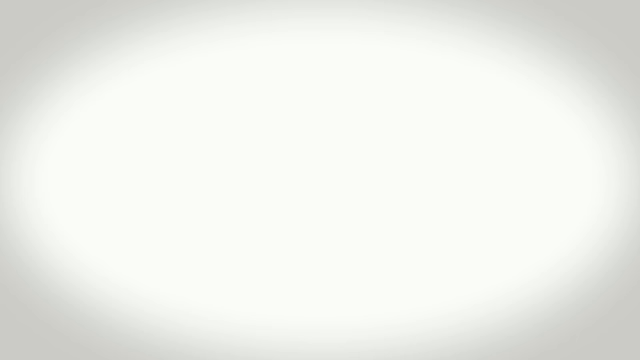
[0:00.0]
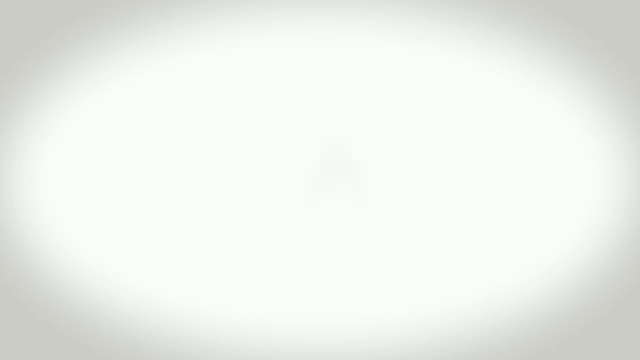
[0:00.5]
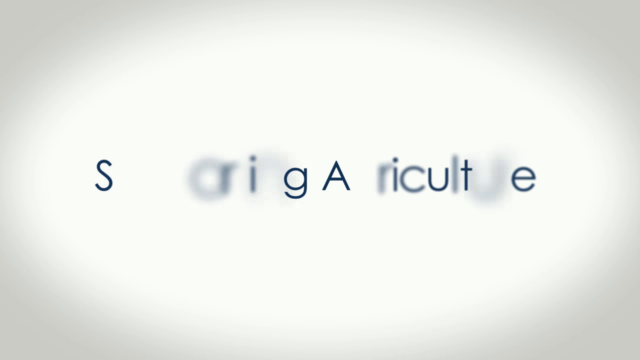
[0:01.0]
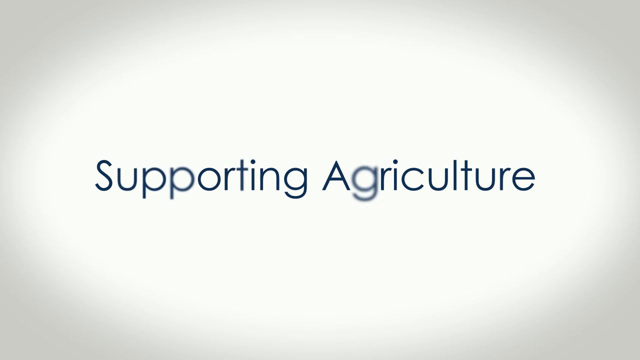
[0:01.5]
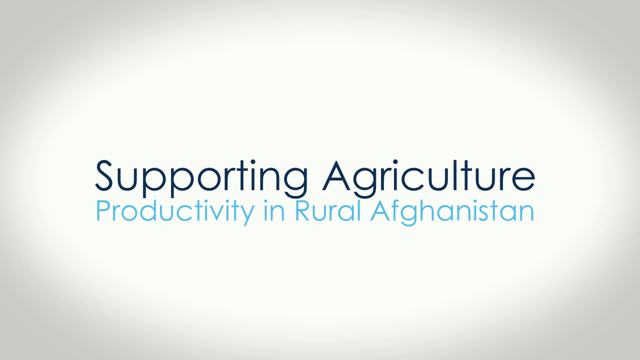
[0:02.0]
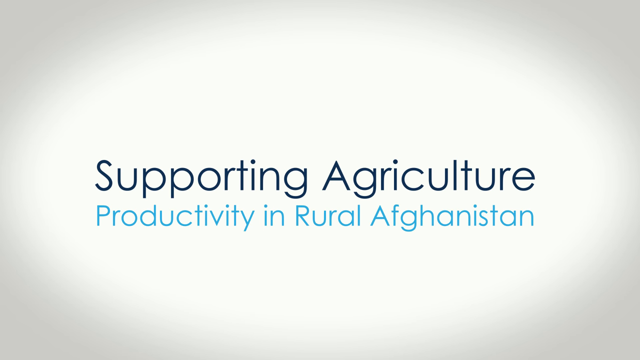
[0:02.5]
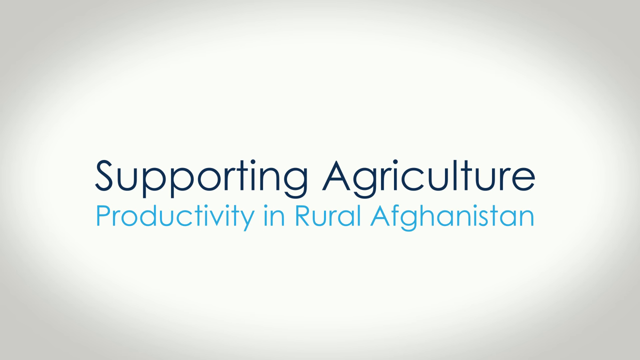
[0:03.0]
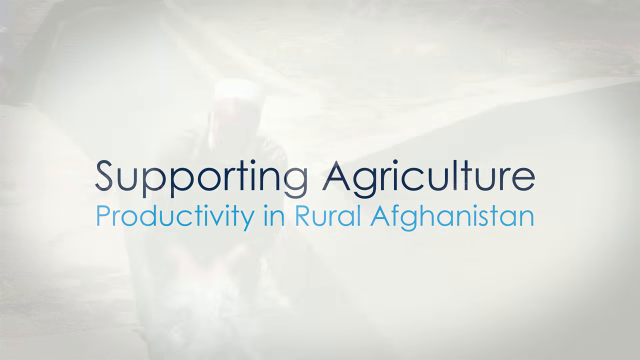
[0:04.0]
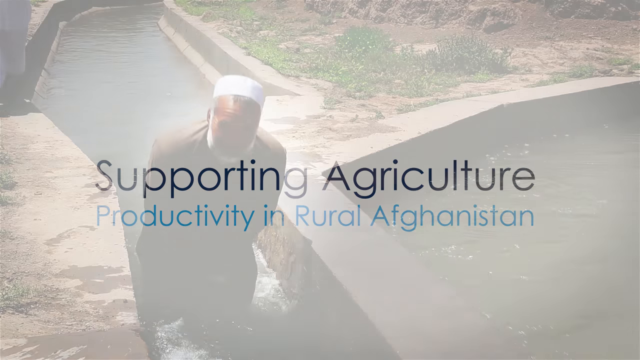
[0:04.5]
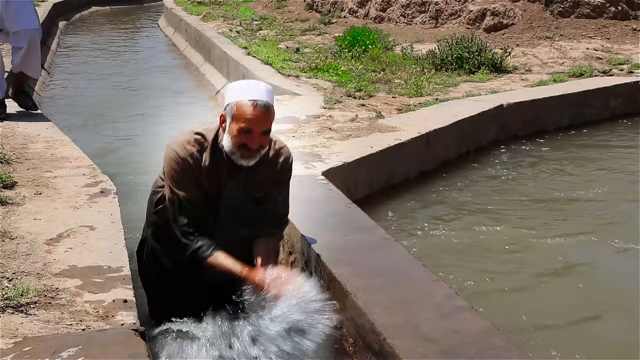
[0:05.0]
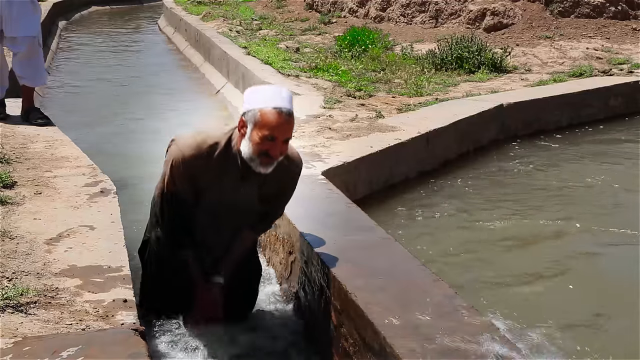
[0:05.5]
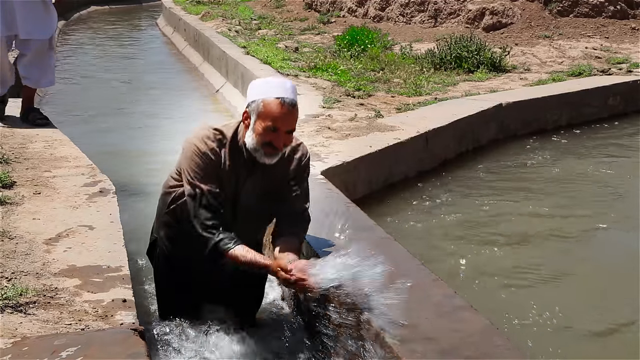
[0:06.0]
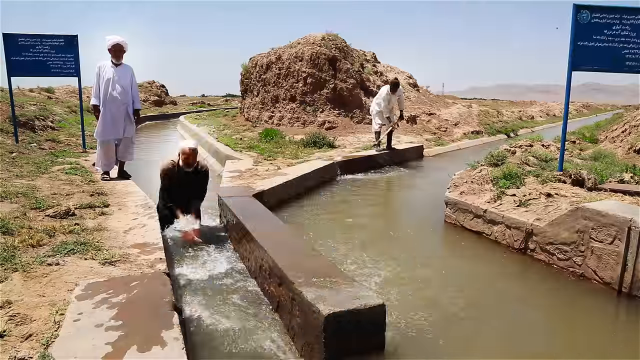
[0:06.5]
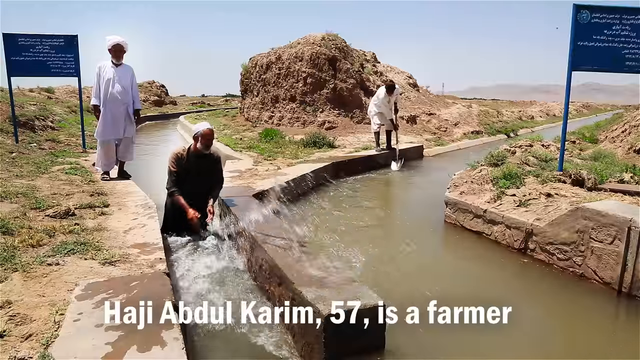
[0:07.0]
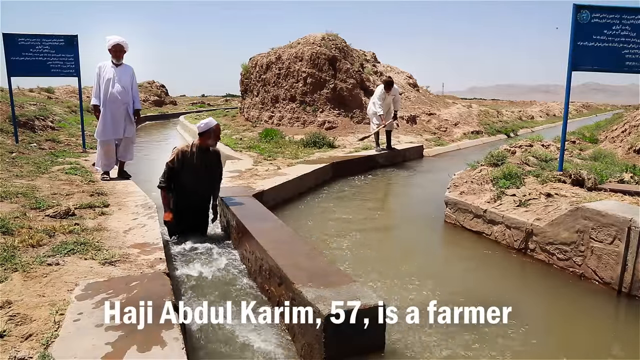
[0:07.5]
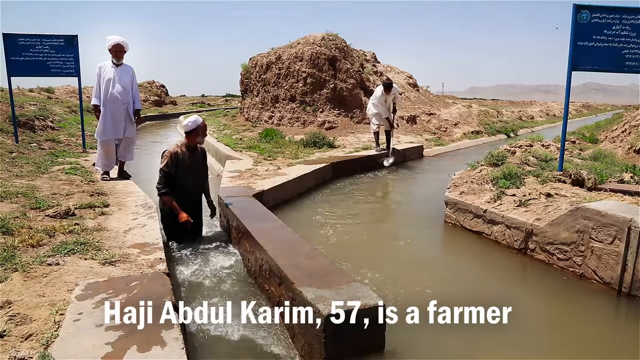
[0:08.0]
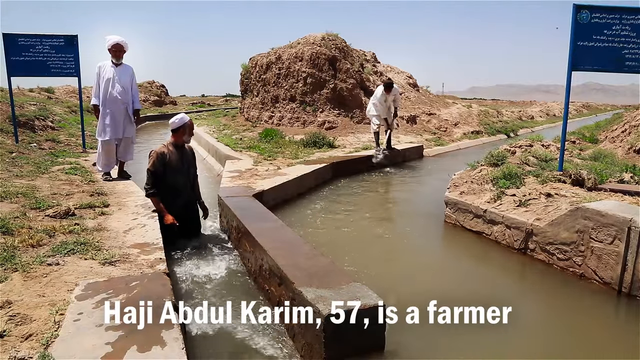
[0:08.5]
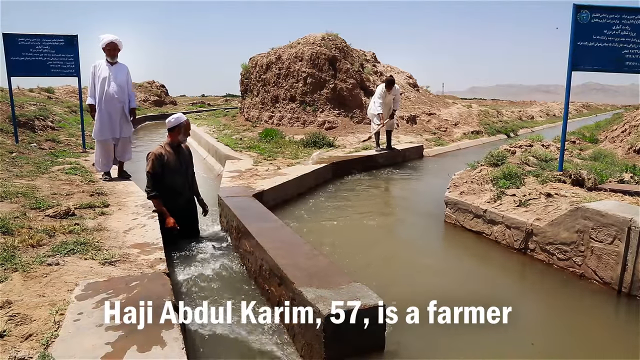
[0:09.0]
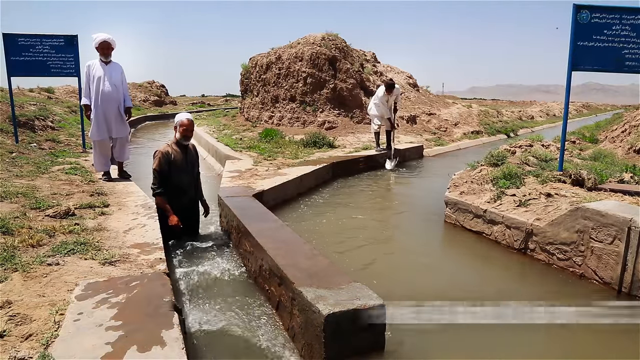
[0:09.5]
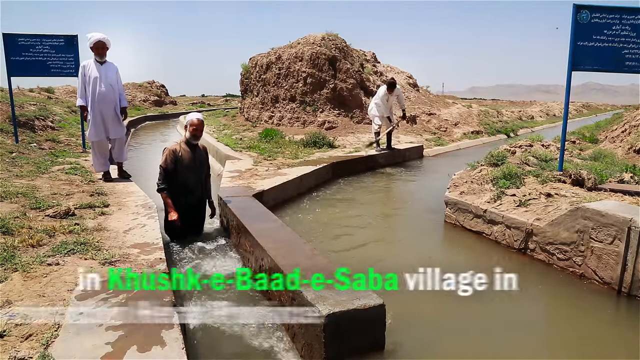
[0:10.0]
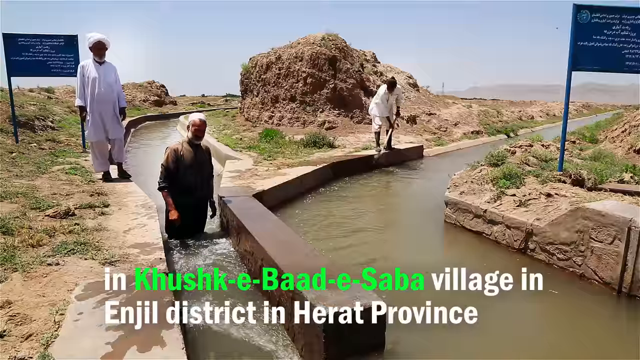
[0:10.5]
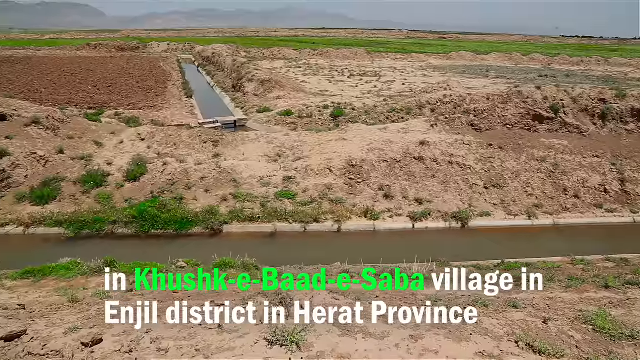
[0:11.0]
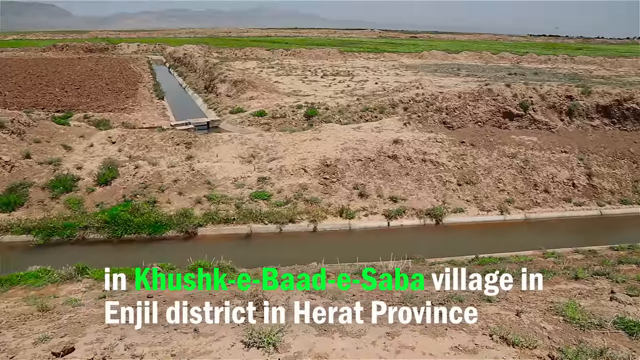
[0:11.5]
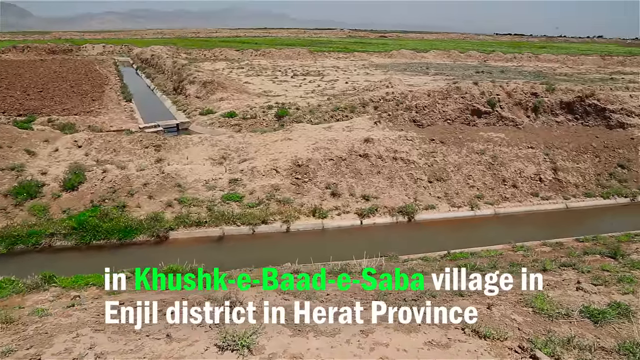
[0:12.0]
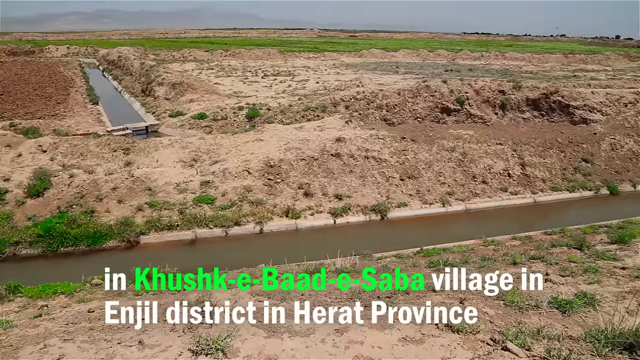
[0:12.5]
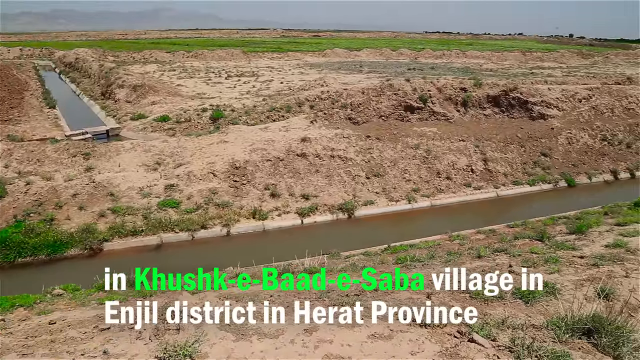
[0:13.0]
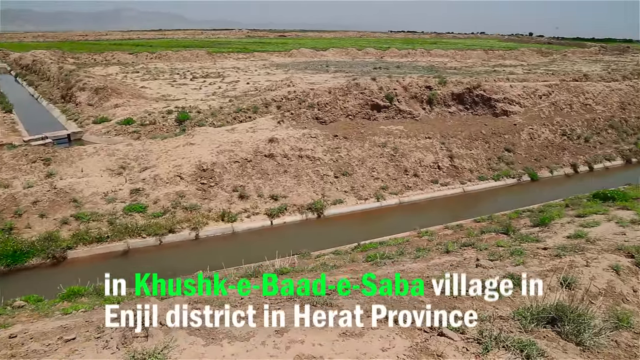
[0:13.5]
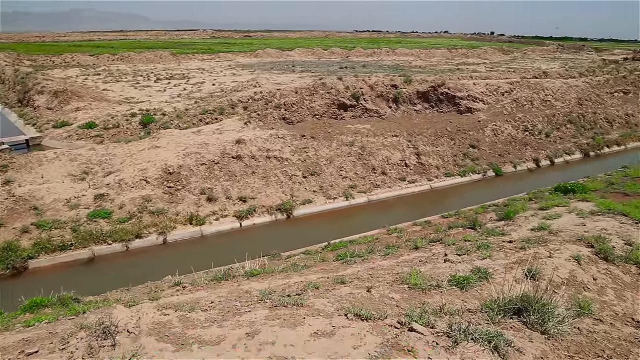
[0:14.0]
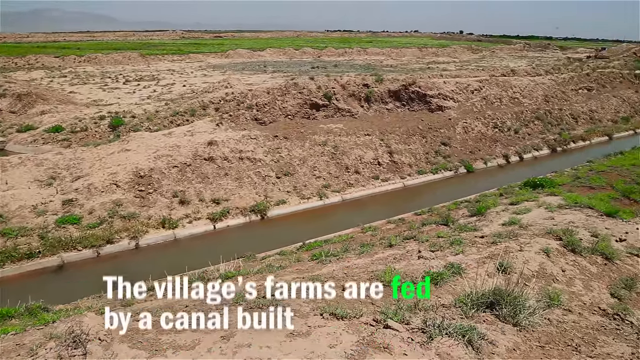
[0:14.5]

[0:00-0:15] An animated text overlay moves across the screen reading "Supporting Agriculture, Productivity, and Rural Afghanistan." The text lingers on the screen, then fades away to show what looks like a Middle Eastern man in traditional clothing, with a white religious cap and brown robes. He is in a waterway, splashing water up. The waterway looks almost like a man-made canal with two channels of water. As the camera pans away, it shows three people: one man in the water in the narrow channel on the left, and another man to the right who appears to have a tool, a shovel, and is shoveling water out. The camera then switches to a wide shot, and on-screen text reads "in Khushke-e-Badeh Sabah village in Injil district in Herat province."